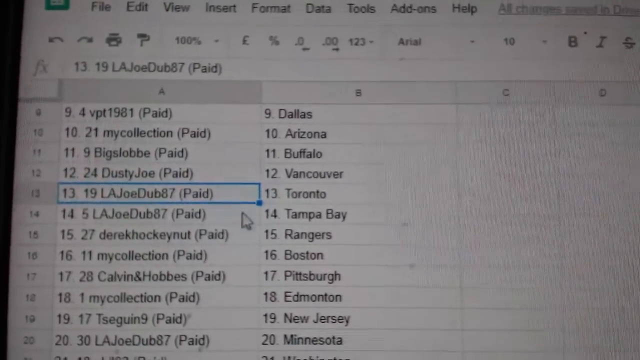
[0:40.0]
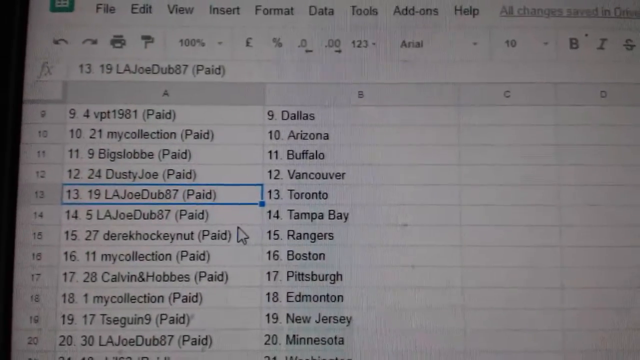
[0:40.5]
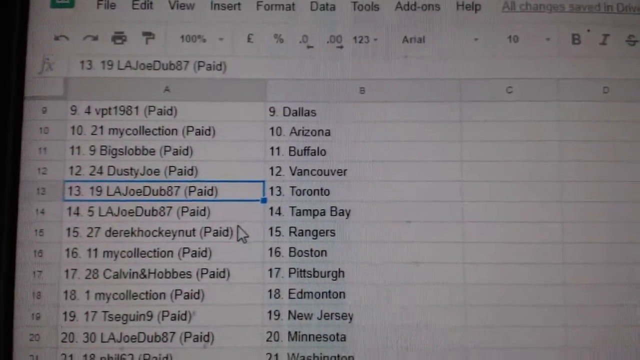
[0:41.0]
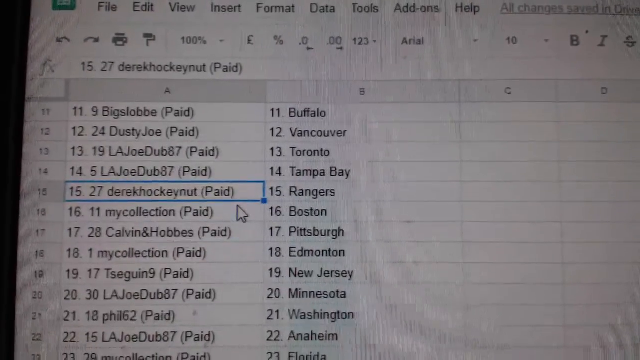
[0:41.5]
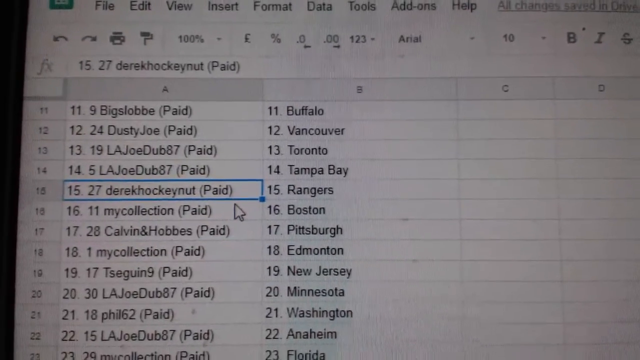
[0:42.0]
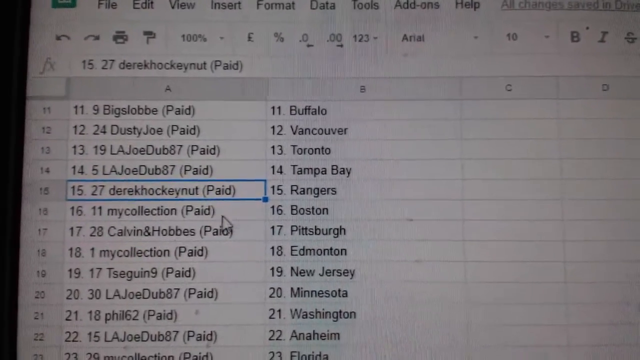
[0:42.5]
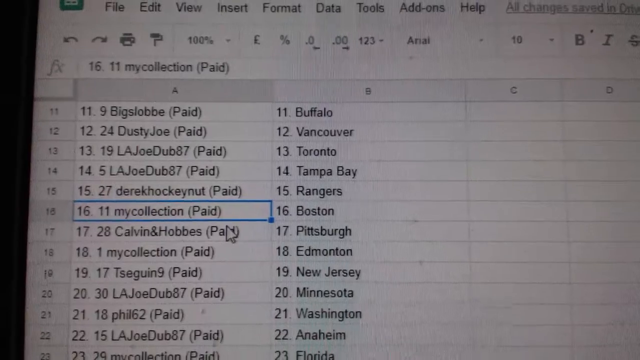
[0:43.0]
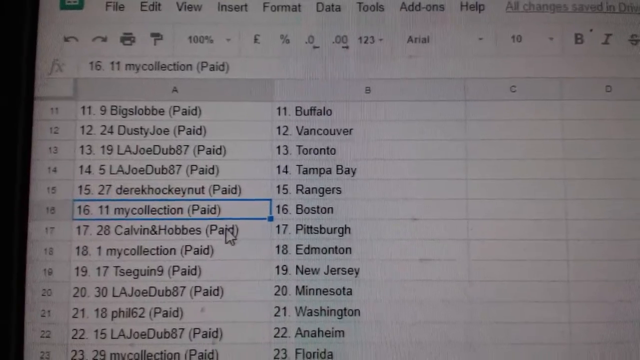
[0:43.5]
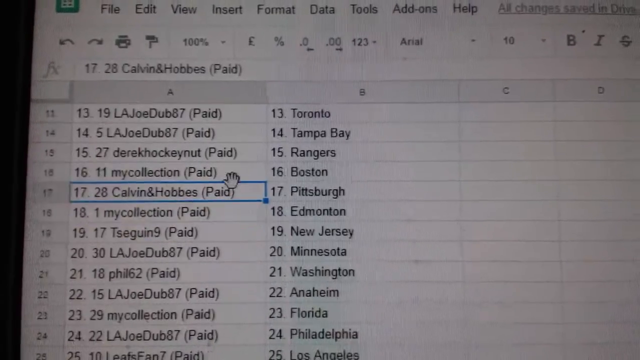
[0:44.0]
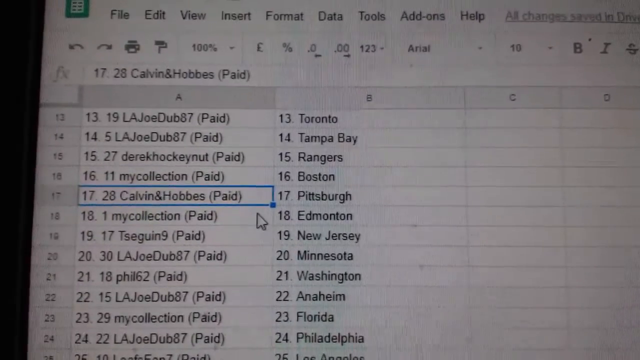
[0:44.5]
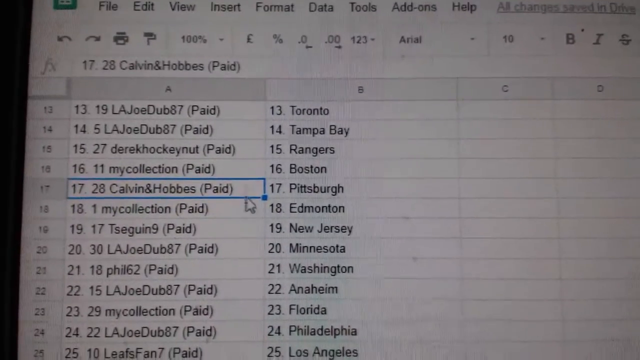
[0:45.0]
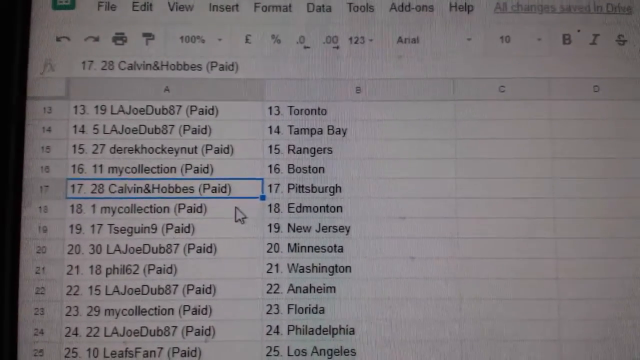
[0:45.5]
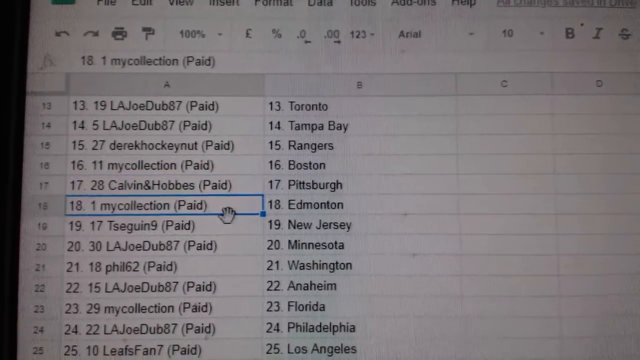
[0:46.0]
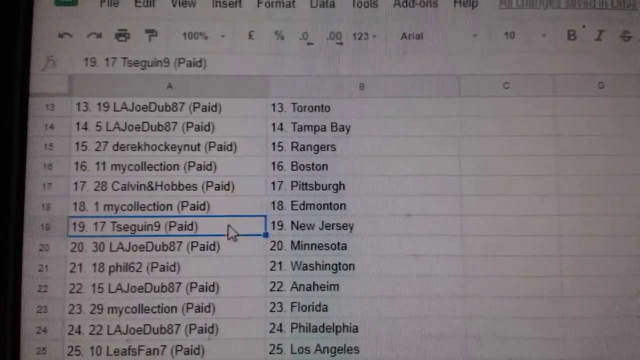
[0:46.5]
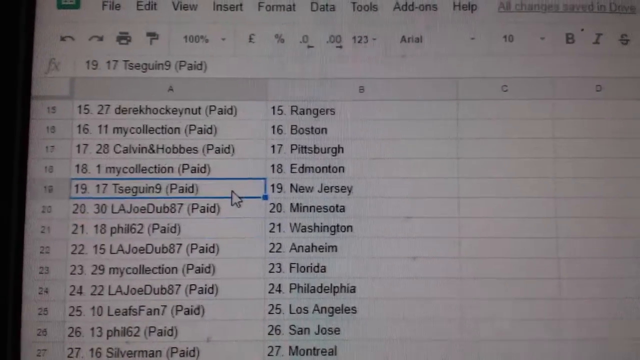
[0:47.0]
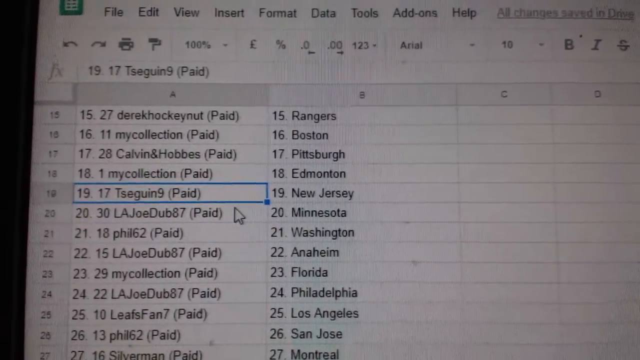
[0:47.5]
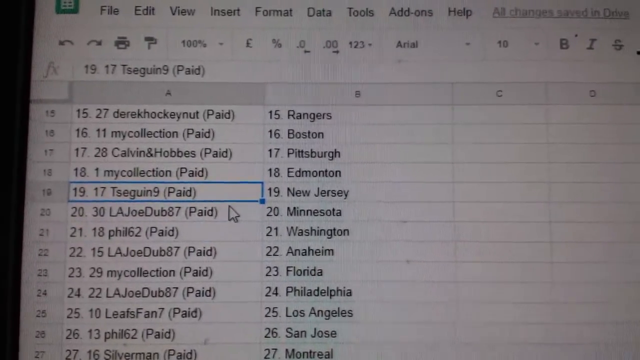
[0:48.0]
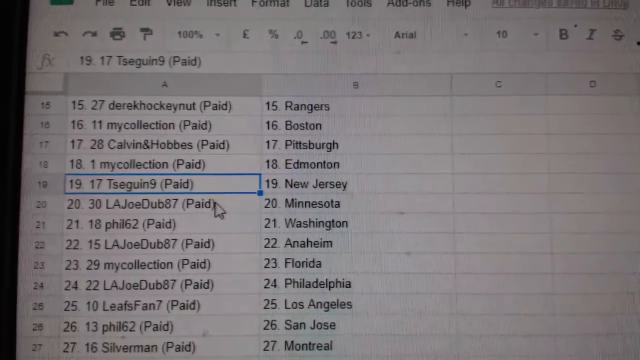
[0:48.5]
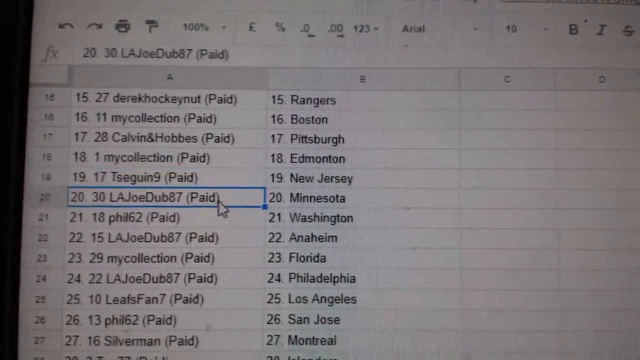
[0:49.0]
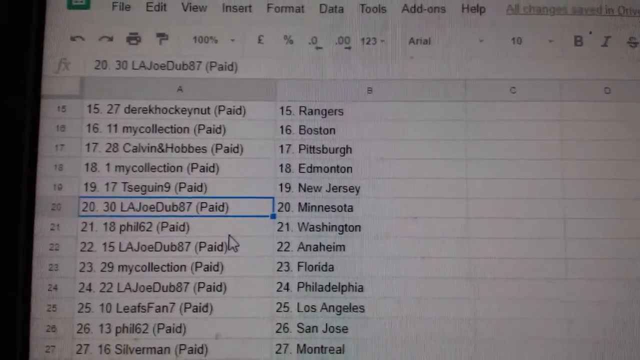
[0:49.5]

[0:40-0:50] He is still focusing on the left side and looks like he is scrolling down. When he clicks on something with the mouse, a blue square appears around it, as with L.A., Joe, Dub, 87, Paid. There are many bills or accounts listed. The view reaches rows 17 and 18 and he appears to keep scrolling down, maybe trying to find or show something. So far the entries on the left all seem to be marked paid. The row numbers match the typed numbers: row 22 has 22 typed in, followed by a space and something like 15, 27, Derek Hockeynut paid, and the column to the right says something like 15 Rangers.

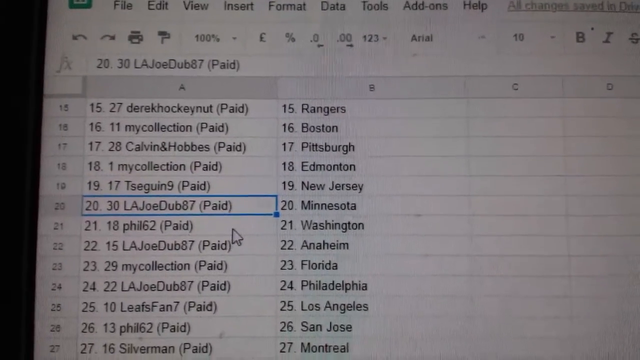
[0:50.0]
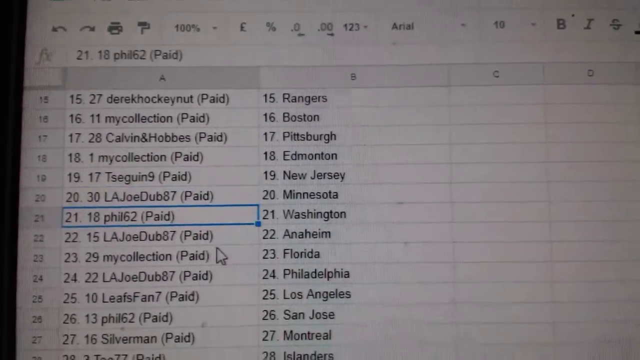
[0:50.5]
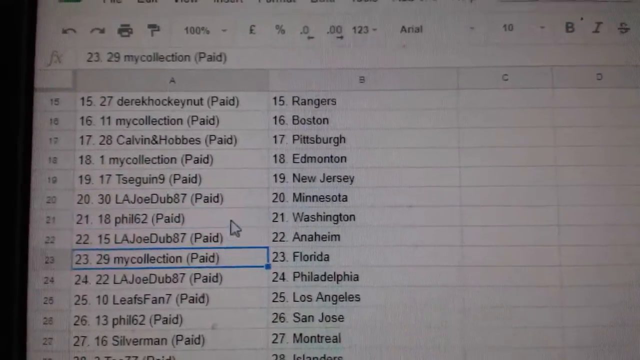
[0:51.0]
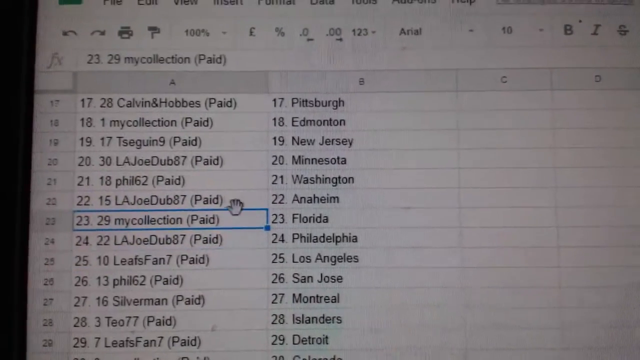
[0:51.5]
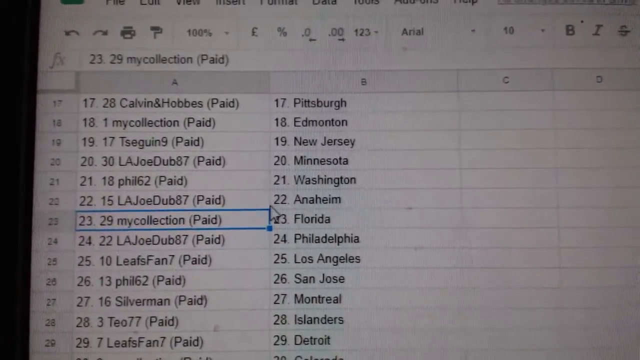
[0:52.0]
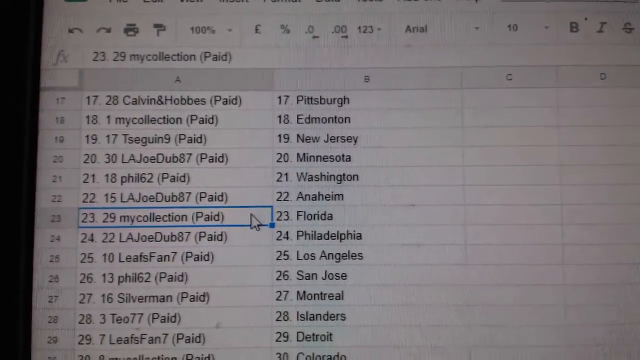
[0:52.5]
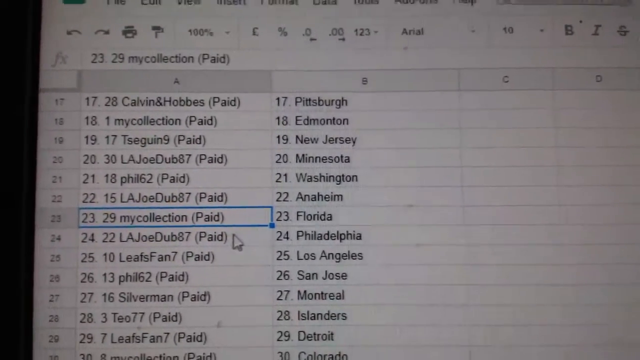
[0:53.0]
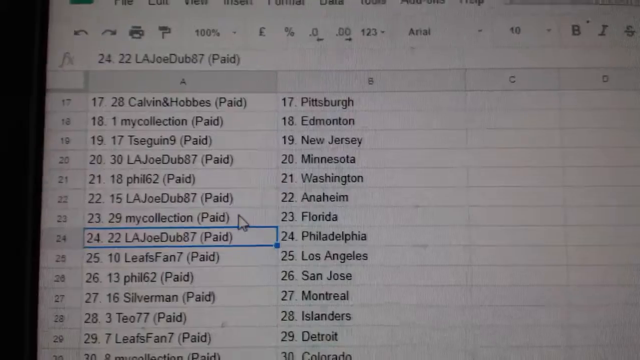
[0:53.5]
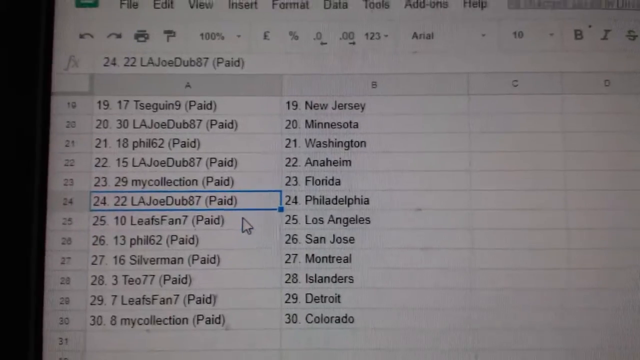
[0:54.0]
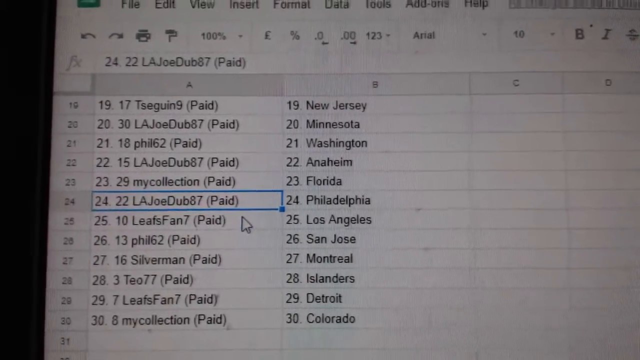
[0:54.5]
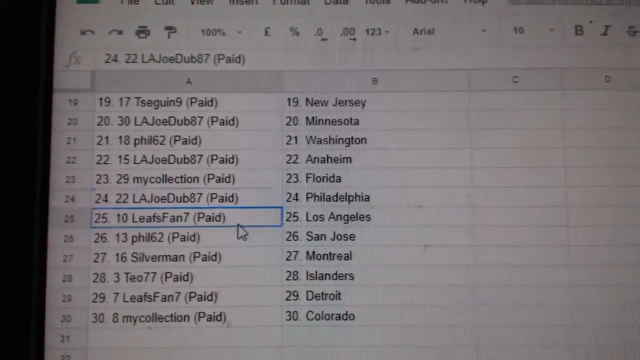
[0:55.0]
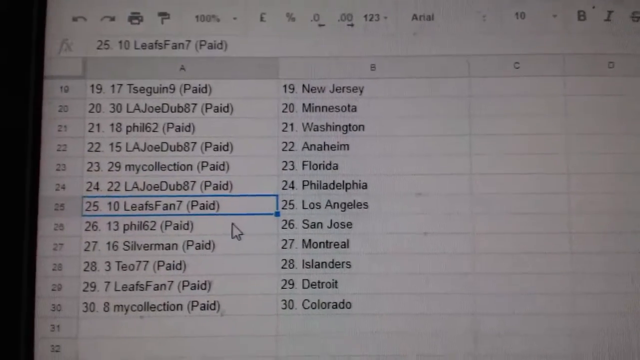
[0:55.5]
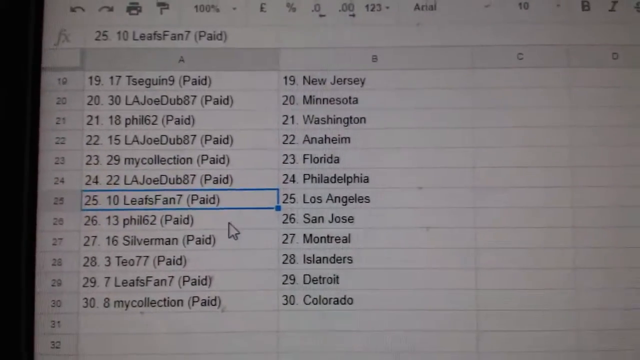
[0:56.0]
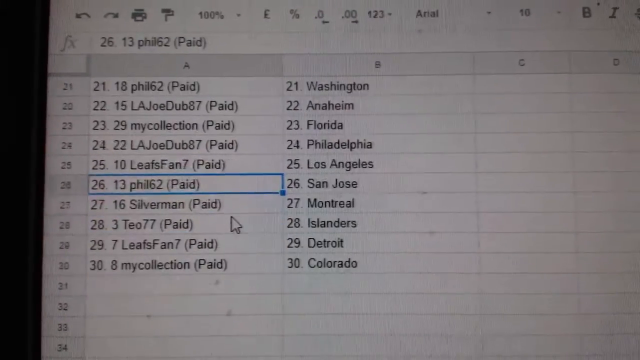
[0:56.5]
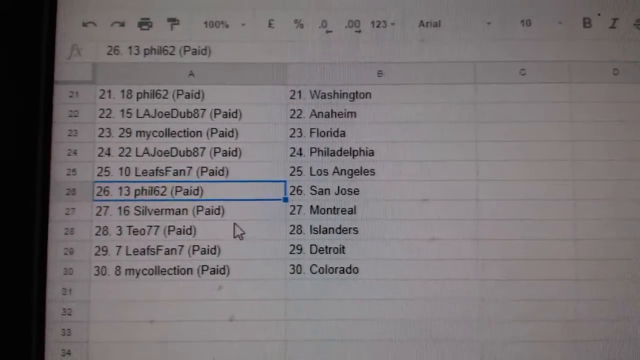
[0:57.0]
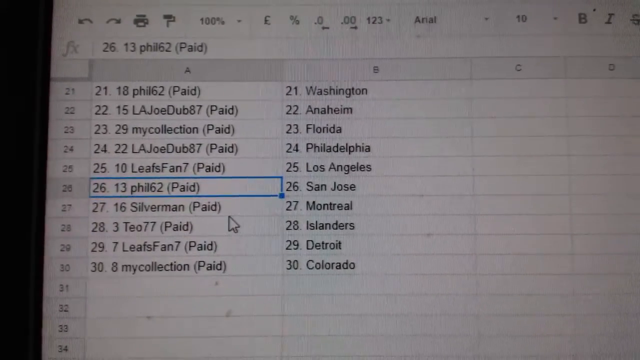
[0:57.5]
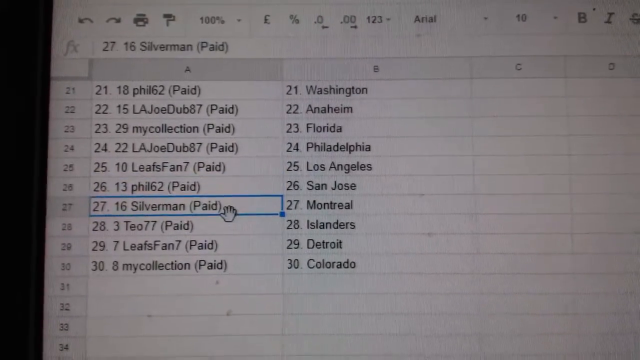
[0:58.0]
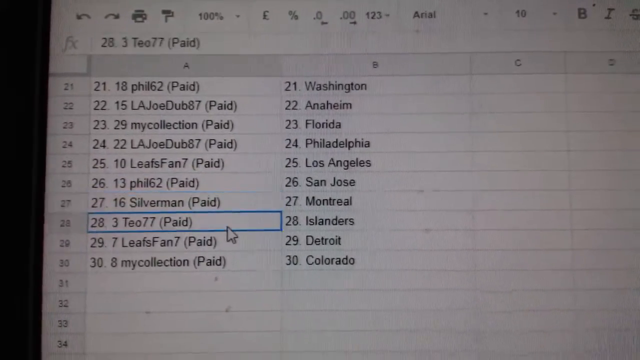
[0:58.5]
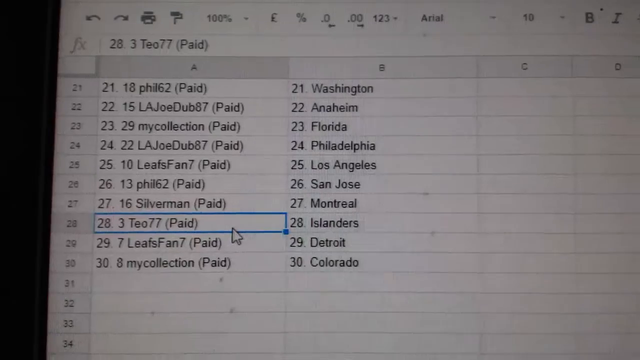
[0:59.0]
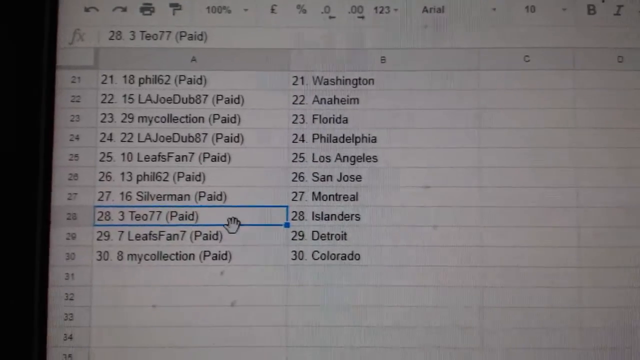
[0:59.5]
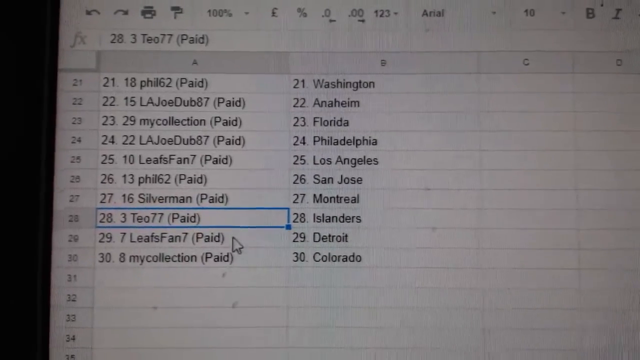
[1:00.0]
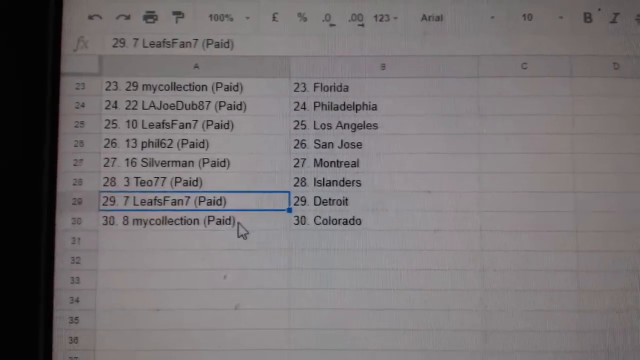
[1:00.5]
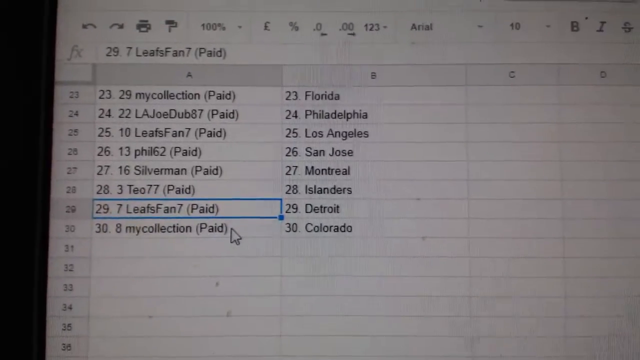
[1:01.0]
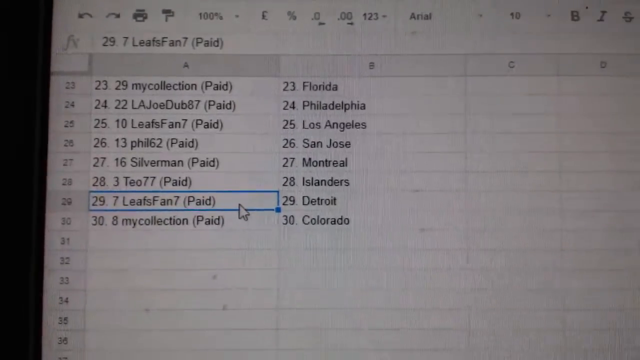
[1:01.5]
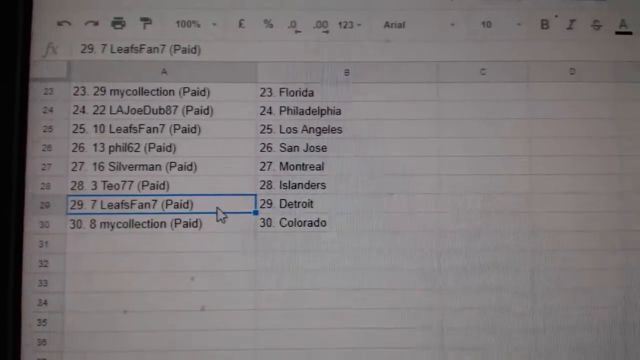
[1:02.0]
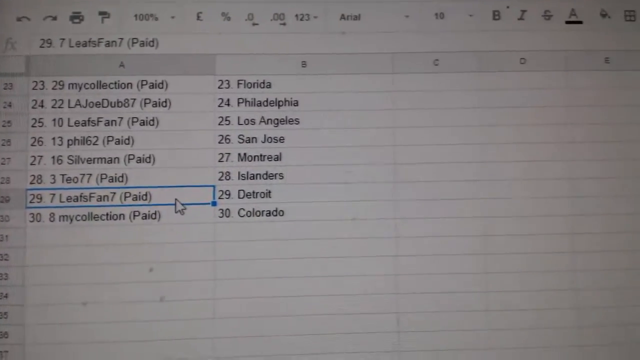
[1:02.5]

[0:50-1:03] On the same screen, the Excel sheet reaches 30 as he goes down. He highlights a lot of content and copies it. He is in an office with blue carpet. He clicks on a green item called randomize, and he clicks on items in the left-hand column. The only columns are A and B, so there are two columns, with 30 rows. Many different cities from all over appear, apparently including Montreal, so not just the United States. It is an Excel spreadsheet with some type of accounts.